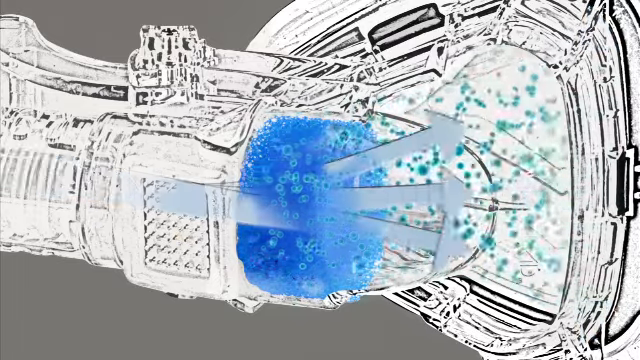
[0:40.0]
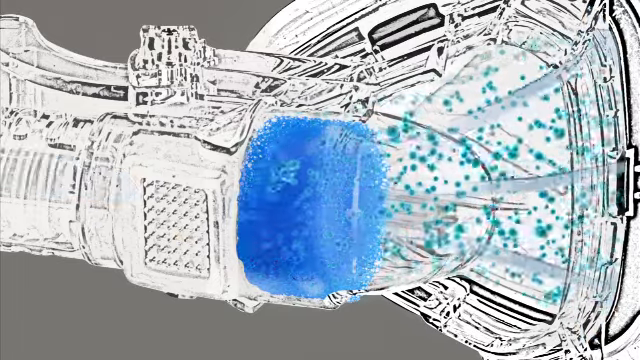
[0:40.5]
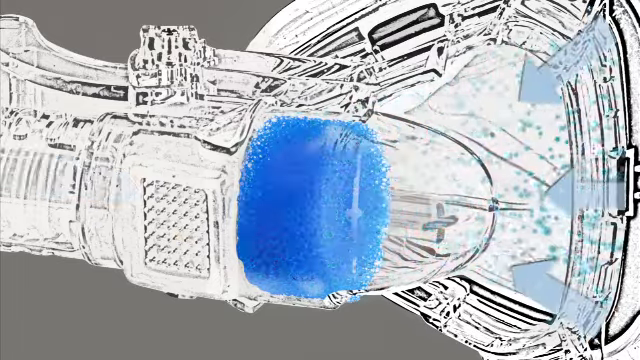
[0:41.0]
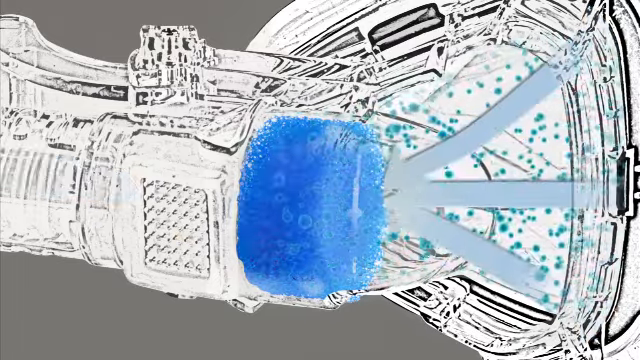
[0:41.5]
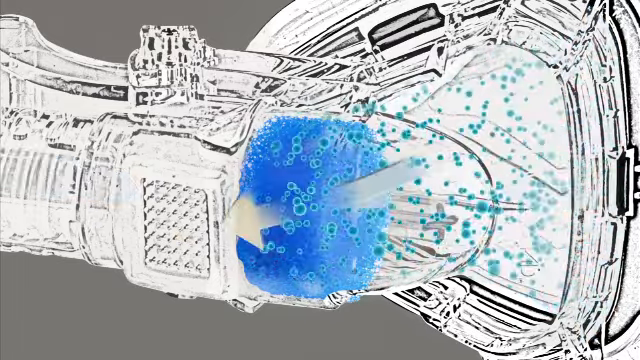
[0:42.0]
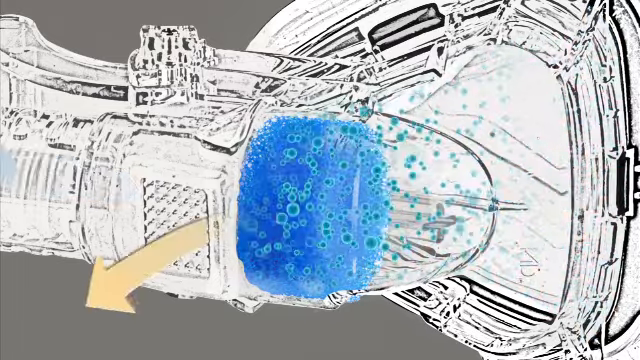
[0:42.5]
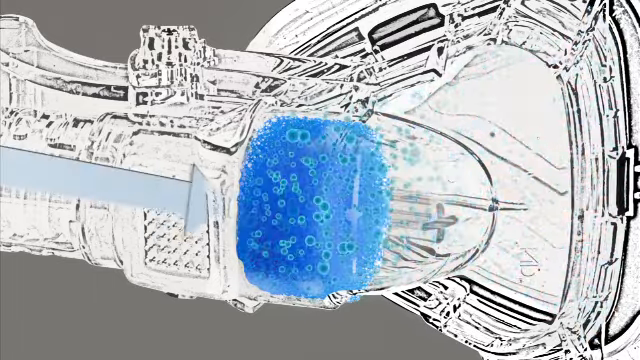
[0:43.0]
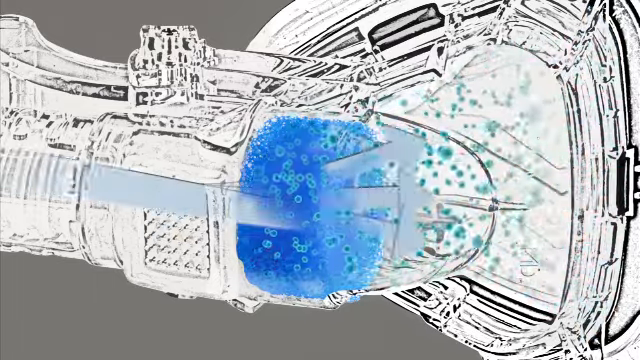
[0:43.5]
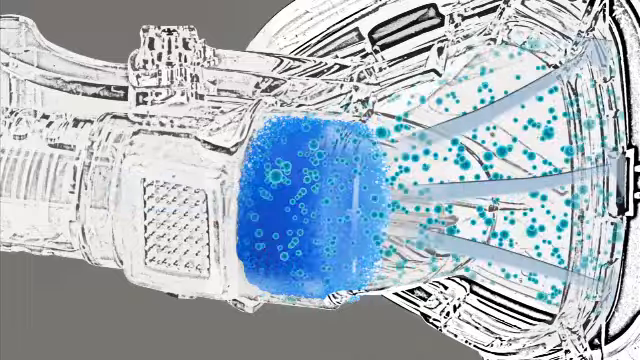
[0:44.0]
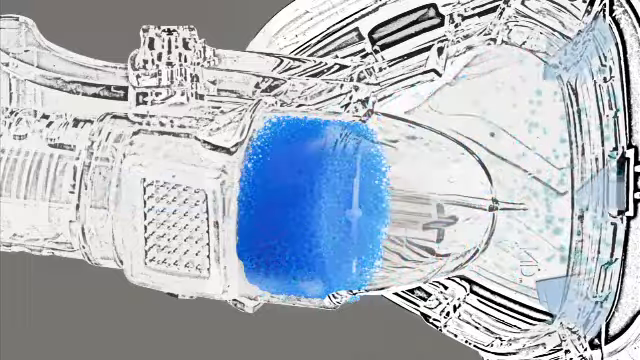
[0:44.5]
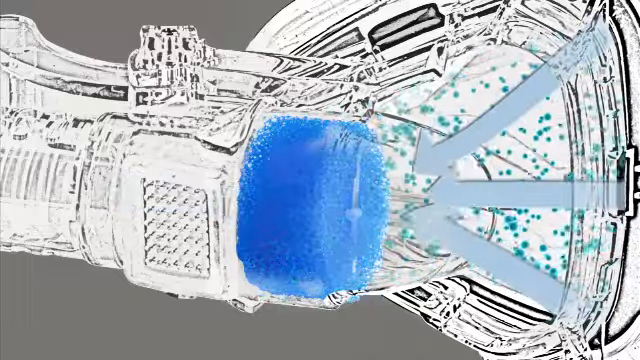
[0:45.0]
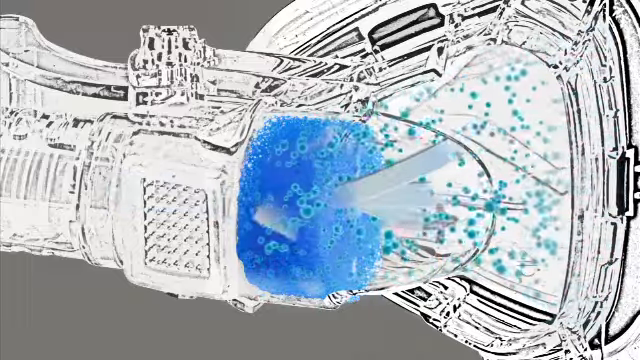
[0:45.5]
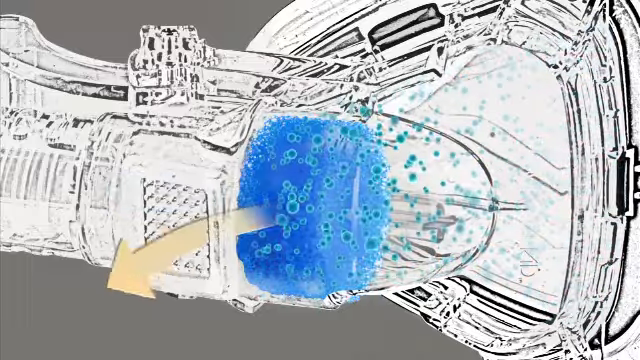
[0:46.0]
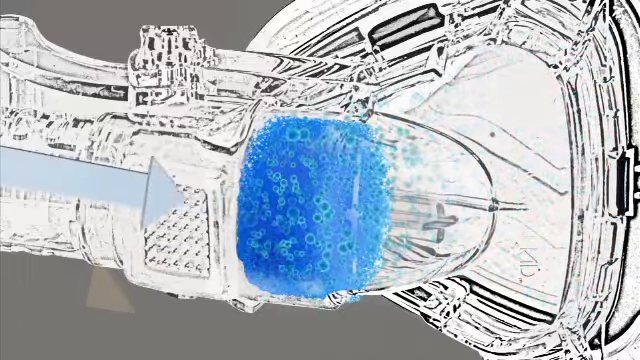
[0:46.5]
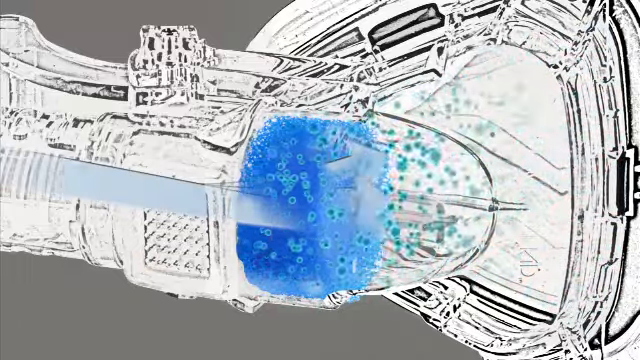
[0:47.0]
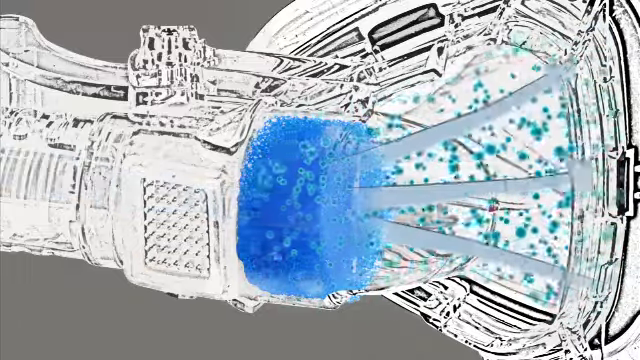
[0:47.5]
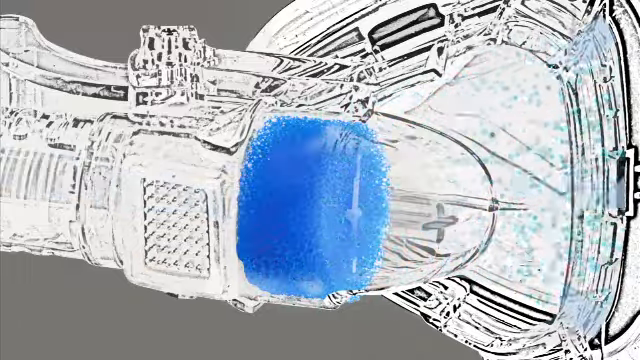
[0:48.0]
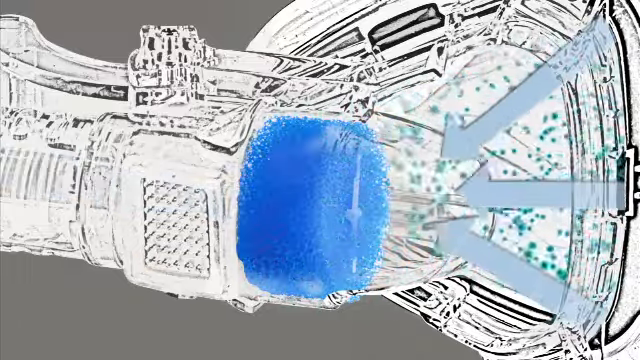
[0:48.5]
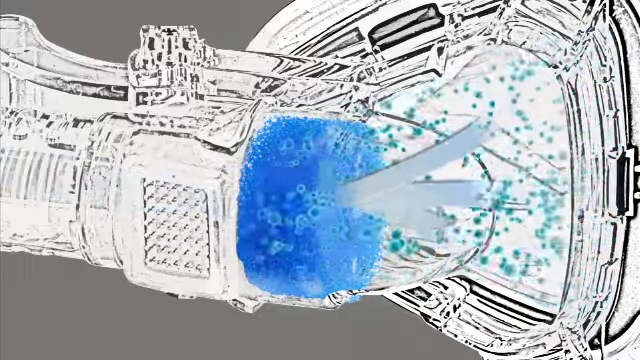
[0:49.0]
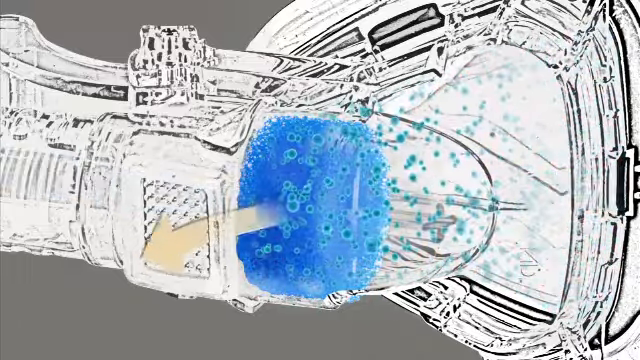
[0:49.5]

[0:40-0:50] A video diagram shows the movement of air in and out of the breathing apparatus. Blue arrows show how the air passes through the device to the patient as they breathe in, and how the air is filtered before it is breathed in. Further arrows show that when the patient breathes out, the air exits through the breathing chamber at the front of the breathing device. The sleep apnea machine is not pictured in this diagram; only the breathing tube and the breathing apparatus that fits over the mouth and nose are shown.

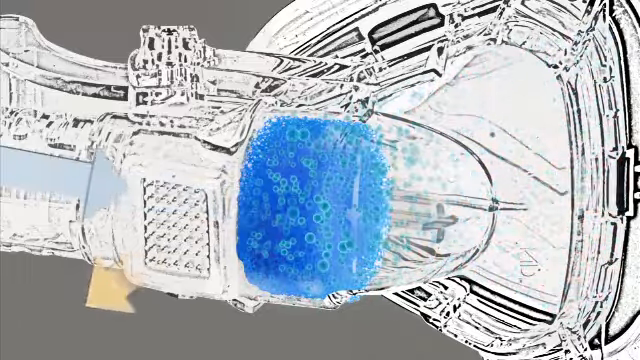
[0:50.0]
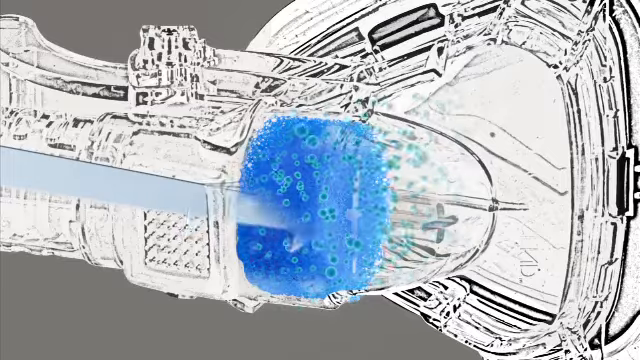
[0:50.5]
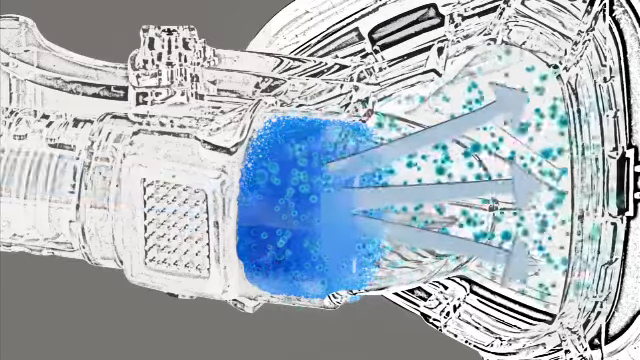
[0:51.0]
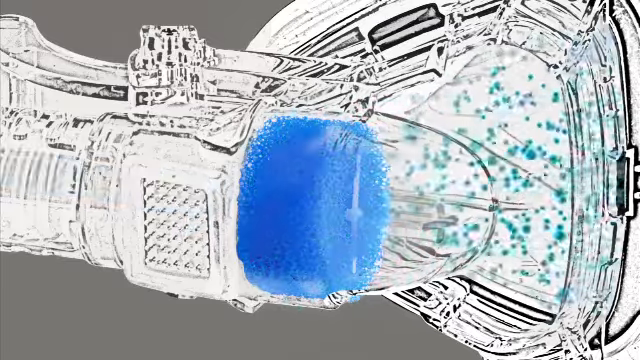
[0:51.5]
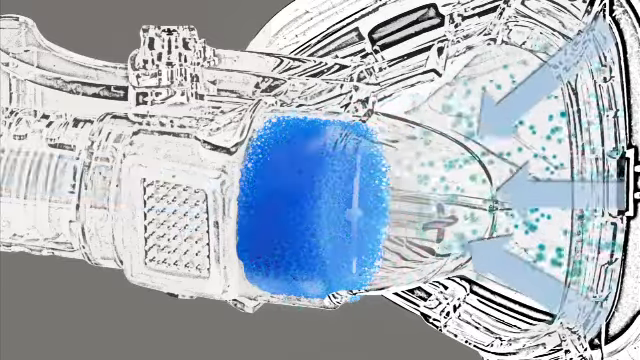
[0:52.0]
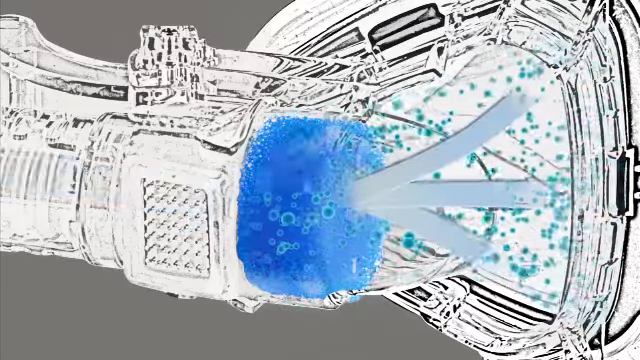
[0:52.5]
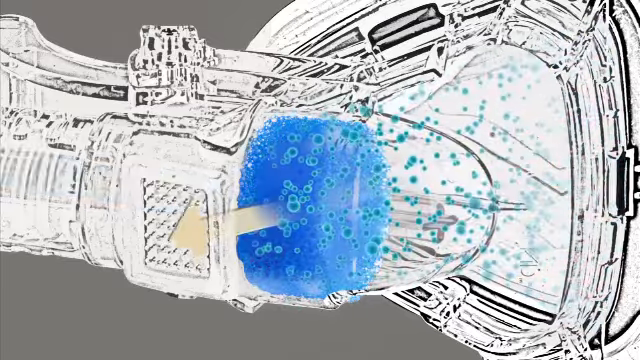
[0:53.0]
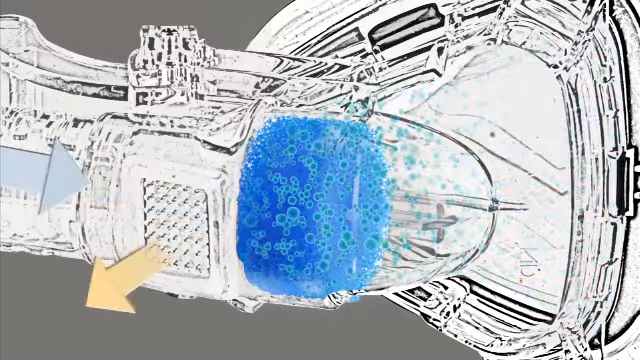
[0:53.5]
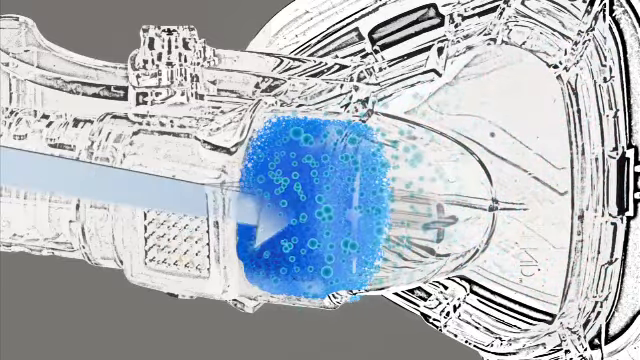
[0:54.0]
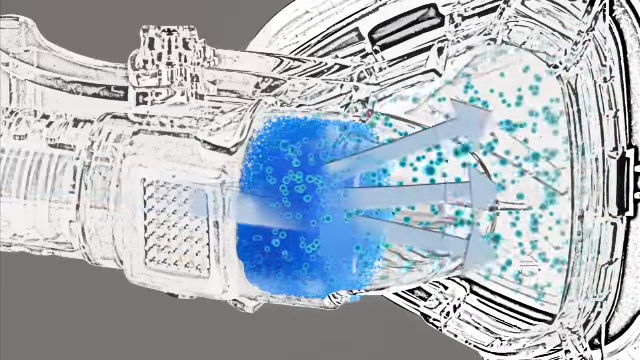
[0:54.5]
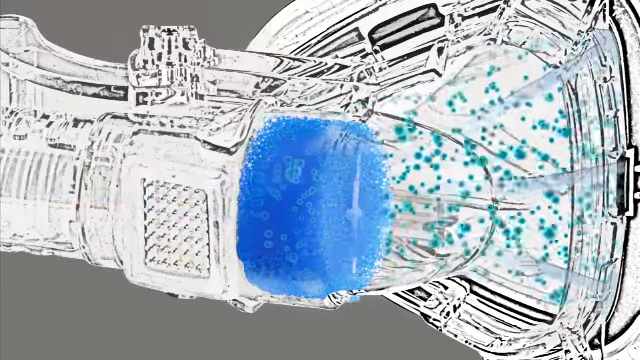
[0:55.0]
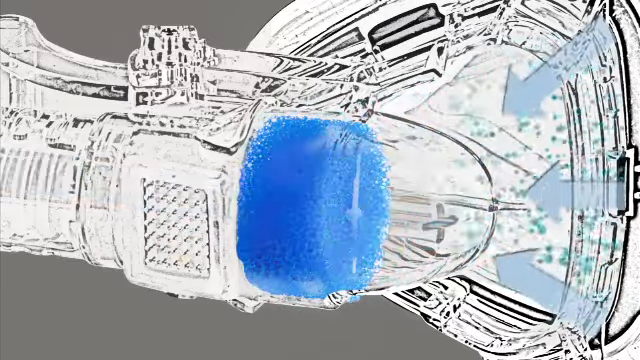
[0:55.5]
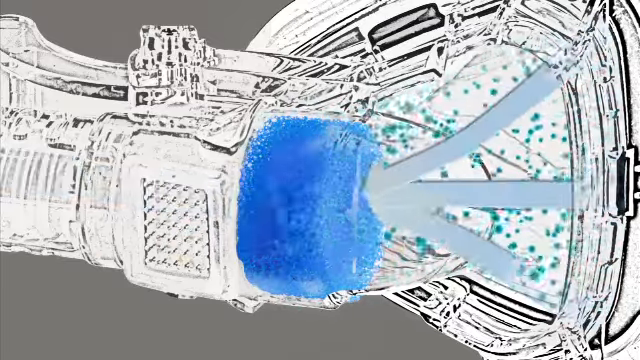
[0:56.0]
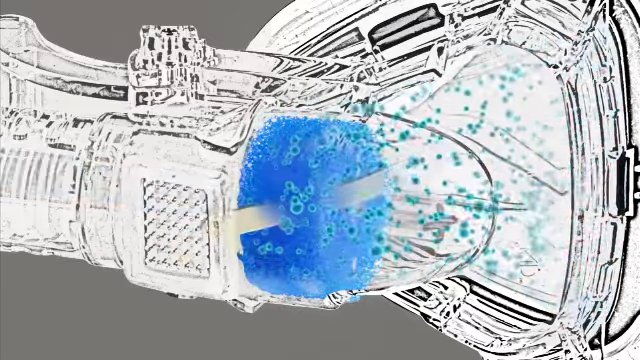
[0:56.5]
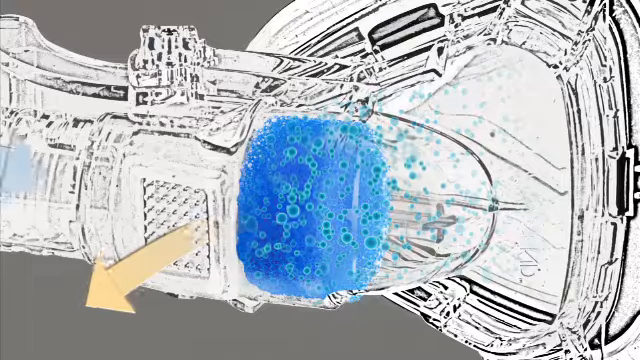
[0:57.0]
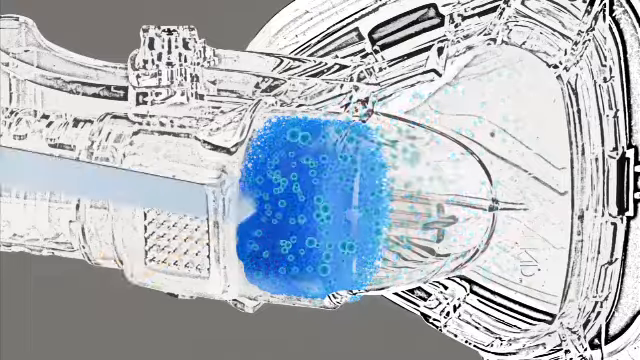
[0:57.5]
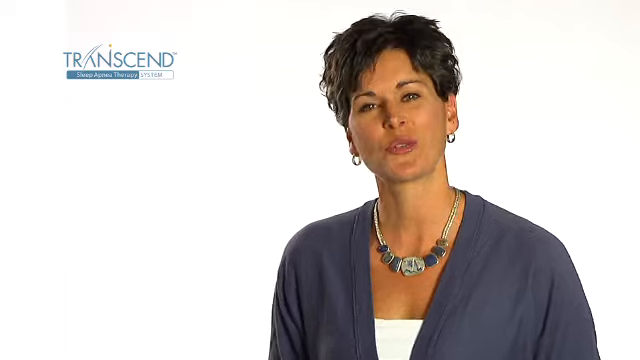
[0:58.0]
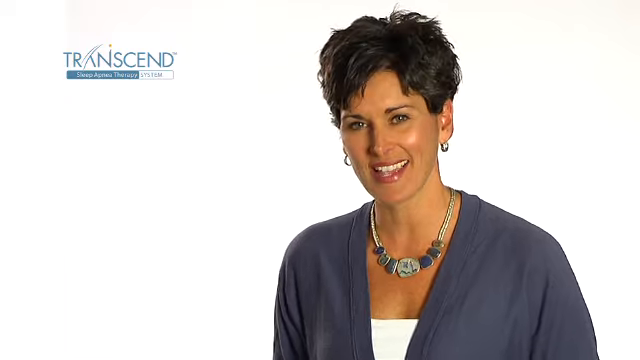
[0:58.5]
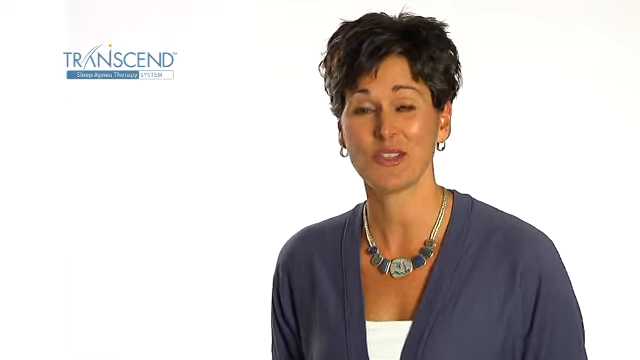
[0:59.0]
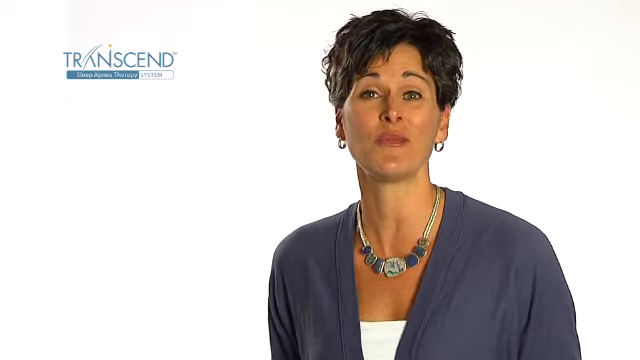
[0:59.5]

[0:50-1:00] The video diagram begins by showing the breathing apparatus that fits over the nose and mouth. Blue arrows show the air taken in by the patient and also the air the patient breathes back out. A yellow arrow shows where the exhaled air exits the breathing apparatus rather than being taken back in by the patient. The area where the exhaled air leaves the apparatus has small holes so that the air can escape.